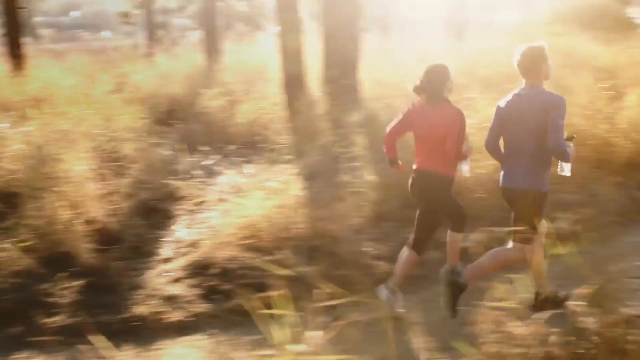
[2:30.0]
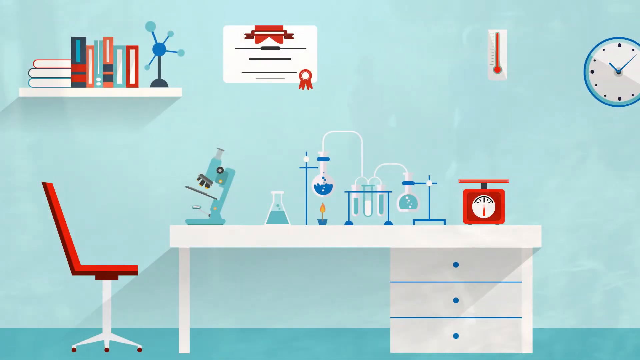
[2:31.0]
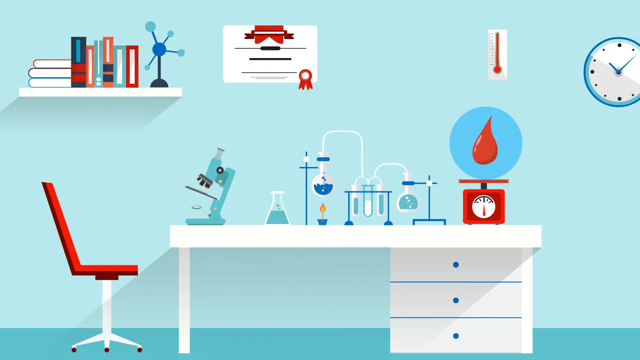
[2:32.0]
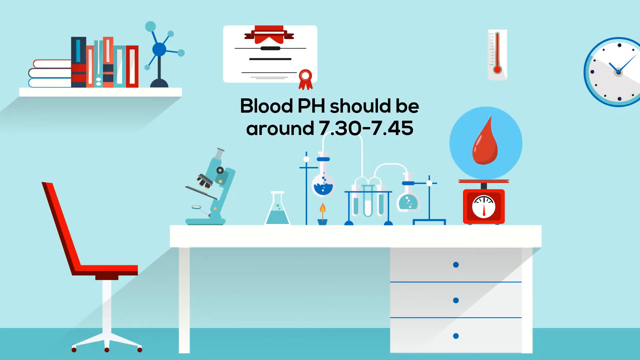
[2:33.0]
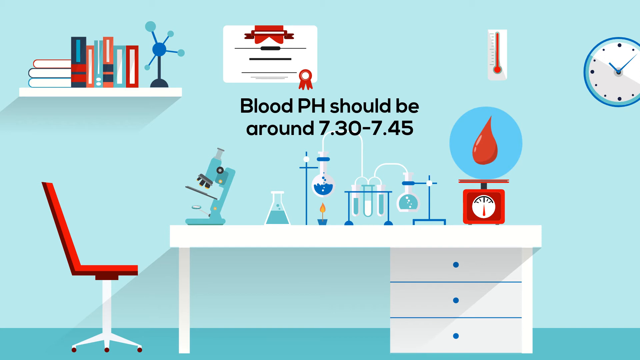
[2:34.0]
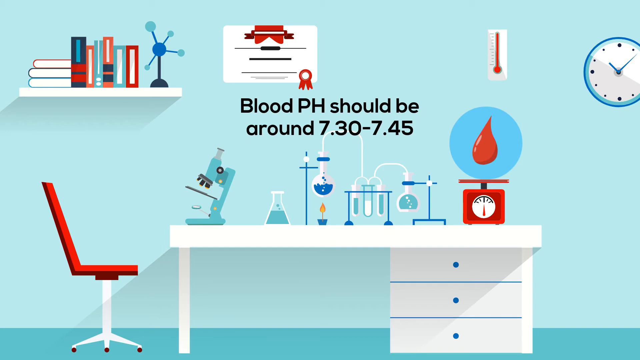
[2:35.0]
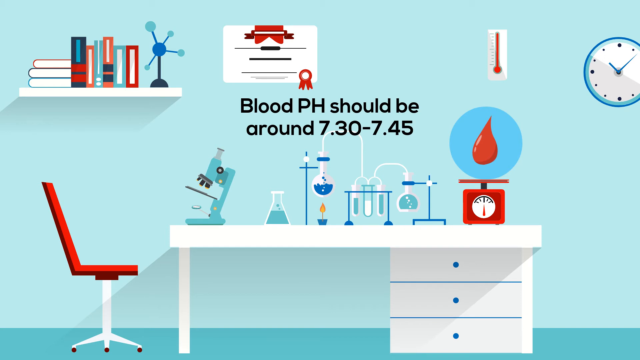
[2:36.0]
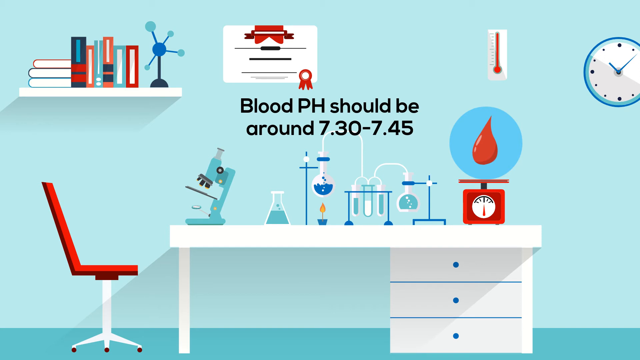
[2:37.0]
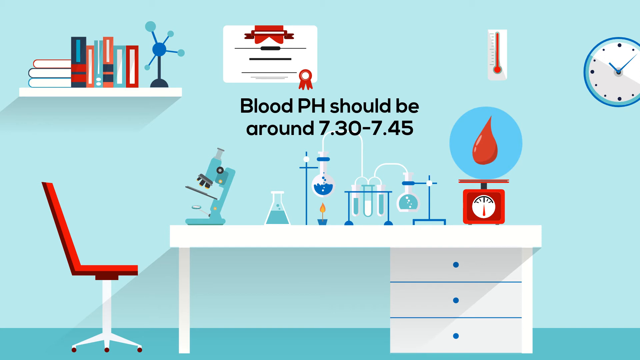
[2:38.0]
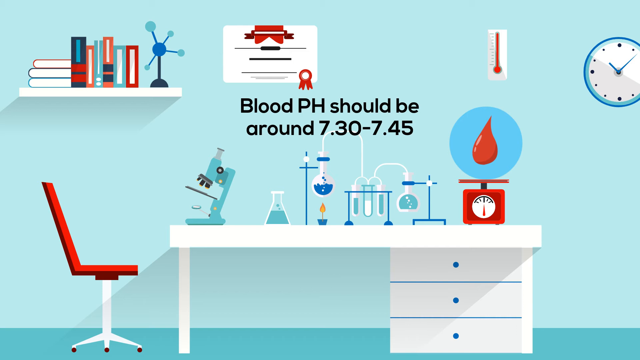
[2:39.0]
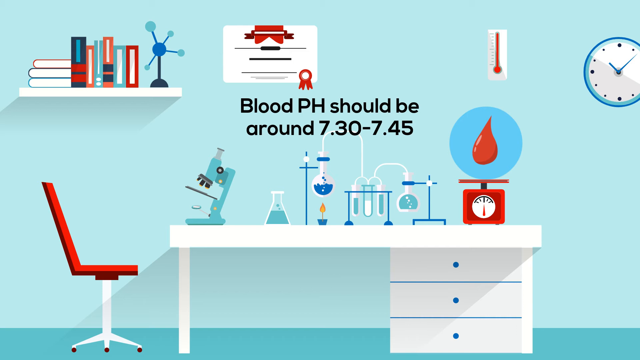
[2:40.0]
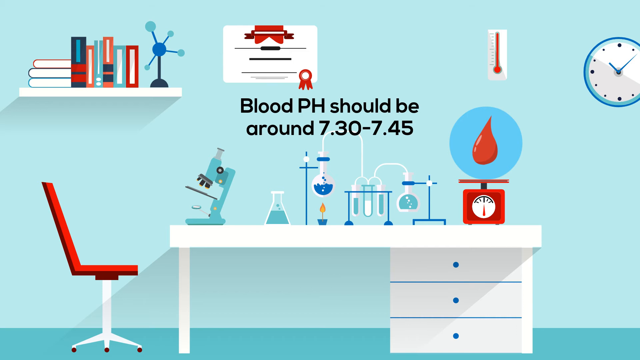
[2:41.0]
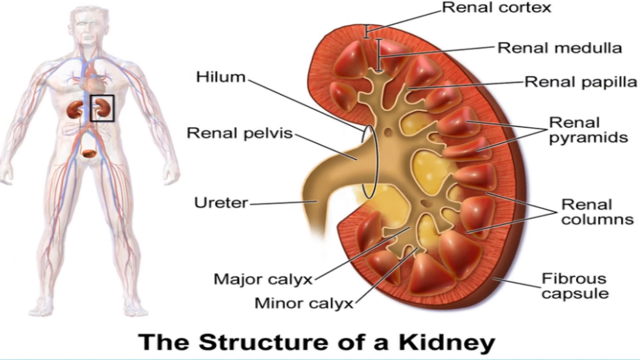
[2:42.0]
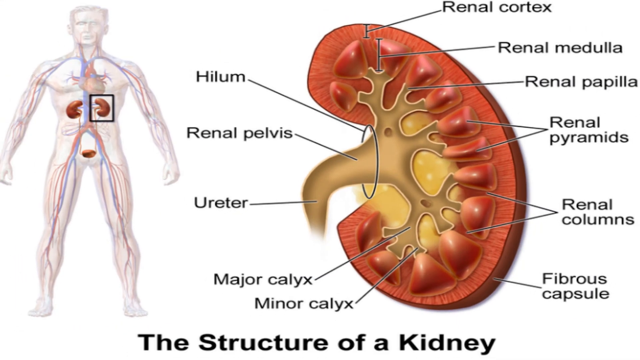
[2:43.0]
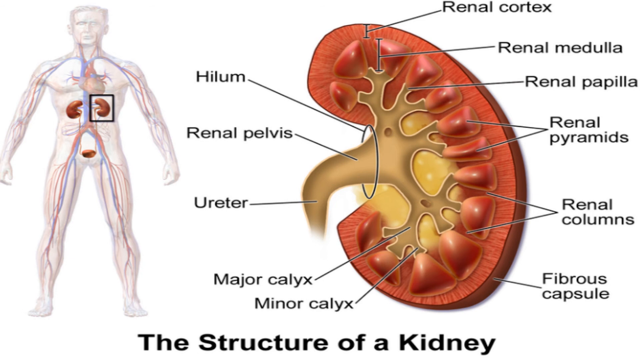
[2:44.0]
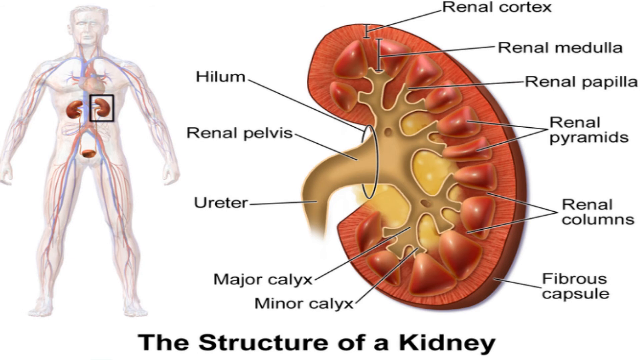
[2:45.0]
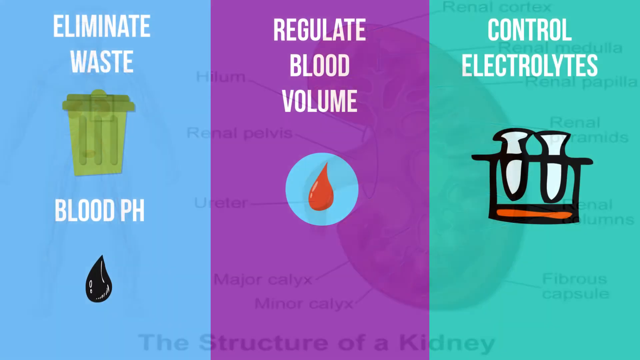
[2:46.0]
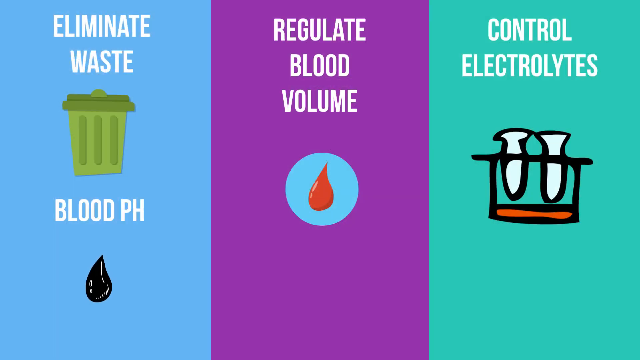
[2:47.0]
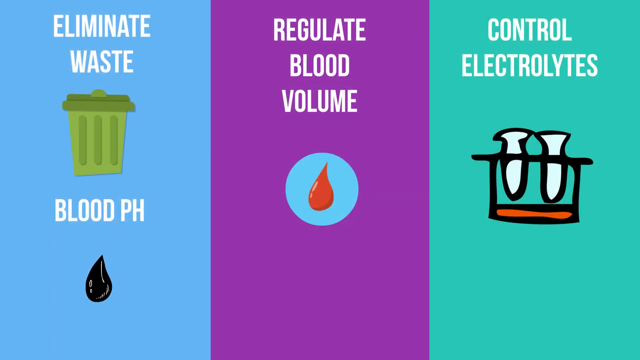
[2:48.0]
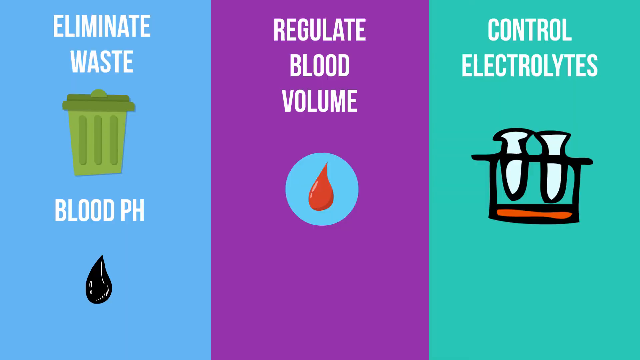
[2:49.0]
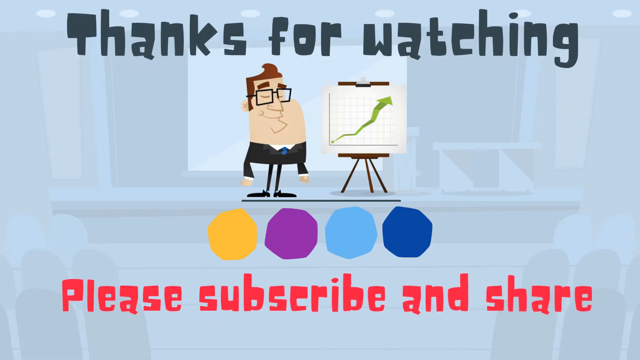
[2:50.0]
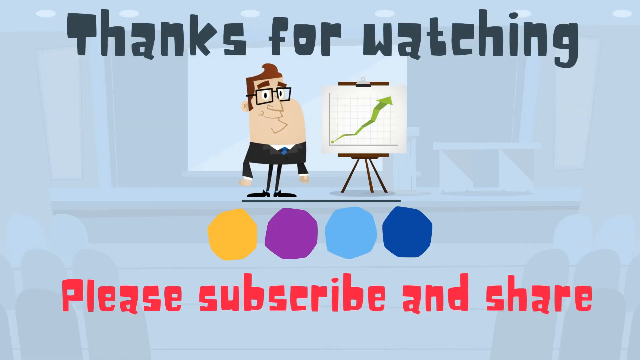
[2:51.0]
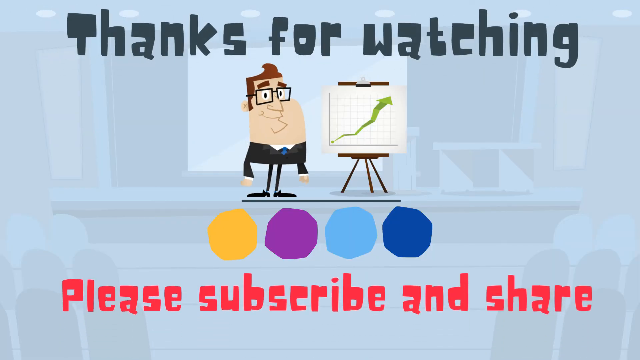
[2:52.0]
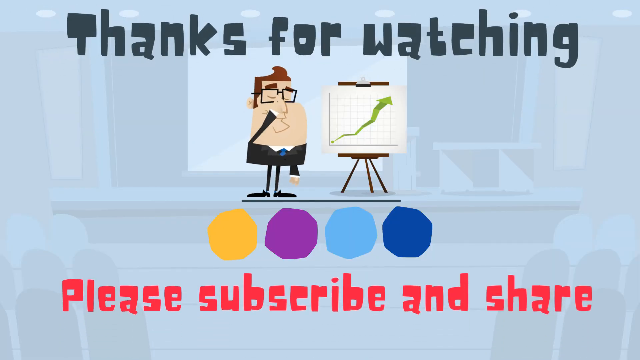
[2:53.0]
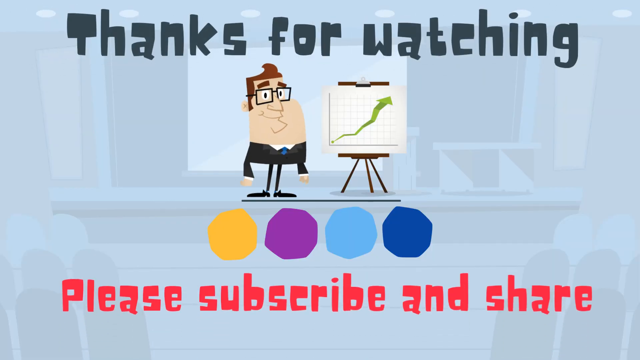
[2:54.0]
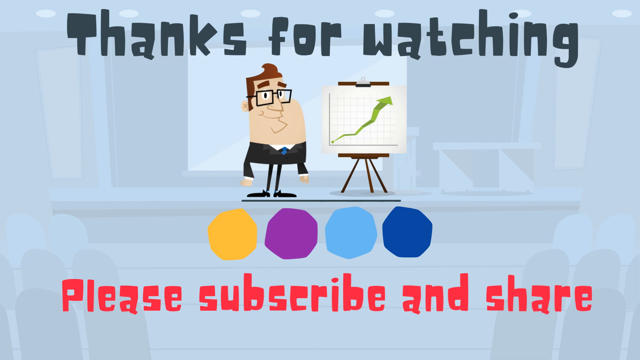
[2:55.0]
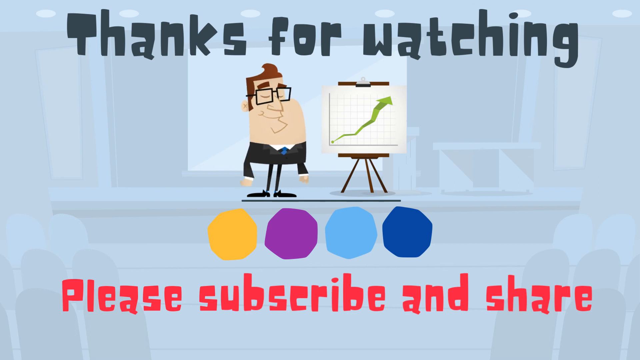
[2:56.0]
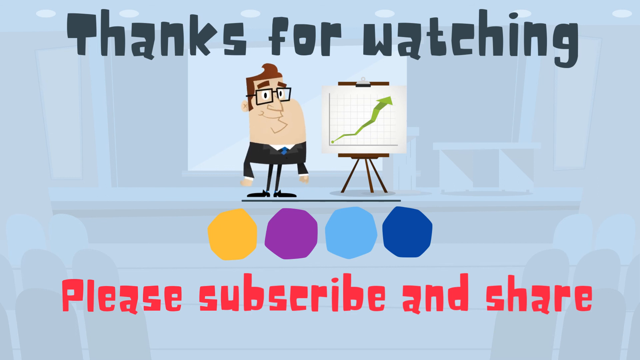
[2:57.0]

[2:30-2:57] A man and a woman run, both wearing black tights; the woman wears a red top and the man a blue top. They both hold water bottles and sip water as they run. It looks like sunrise, with the sun rising, and there are trees around them and a lot of grass. The video then switches to a lab setting, or a diagram of one, where a pop-up text reads "blood pH should be around 730 to 745". There is a clock on the wall, a scale with a drop of blood on it, and a thermometer. The scene then moves to a human.